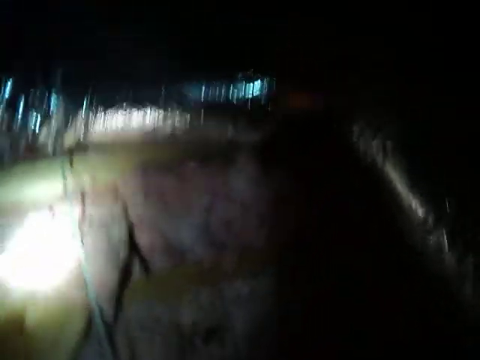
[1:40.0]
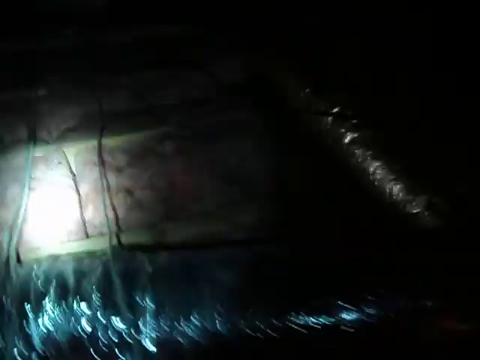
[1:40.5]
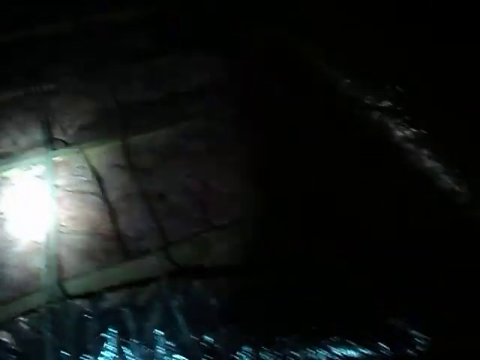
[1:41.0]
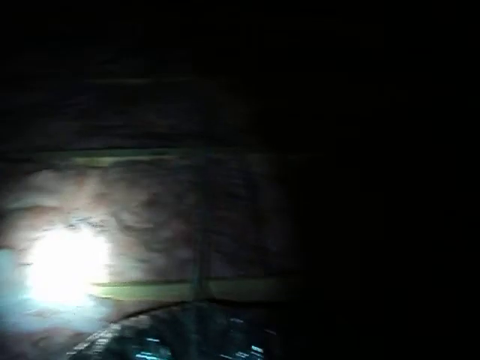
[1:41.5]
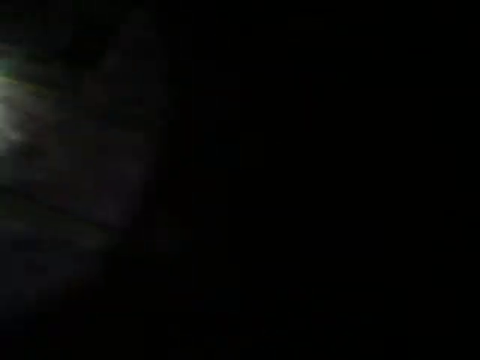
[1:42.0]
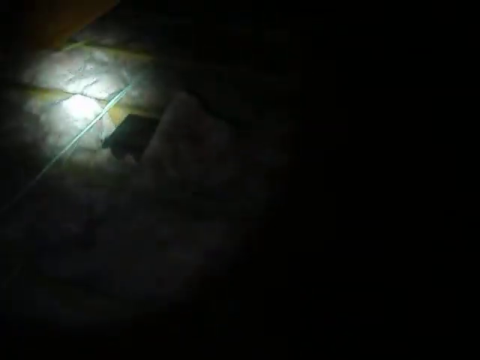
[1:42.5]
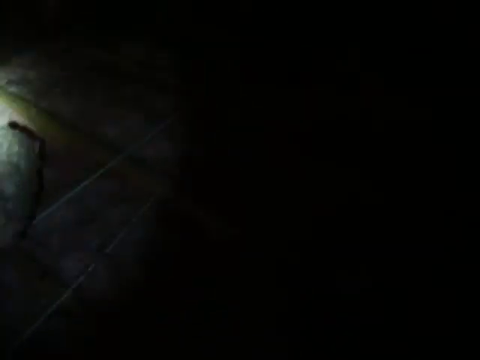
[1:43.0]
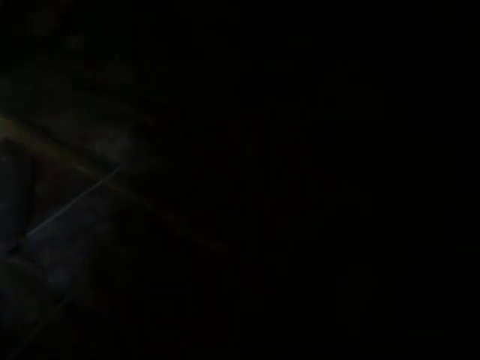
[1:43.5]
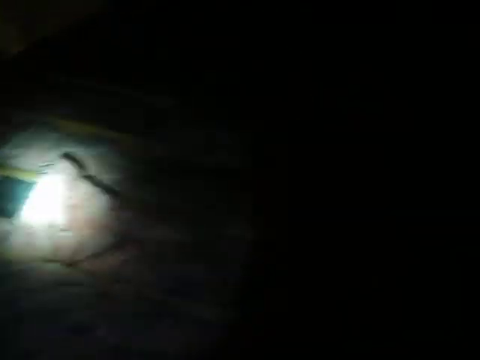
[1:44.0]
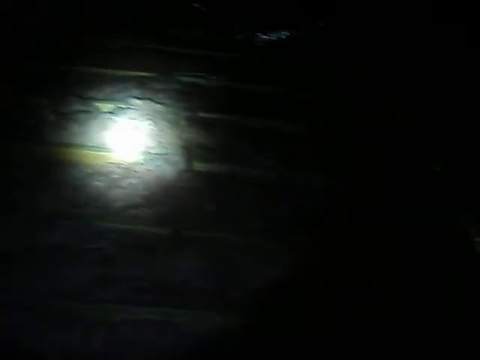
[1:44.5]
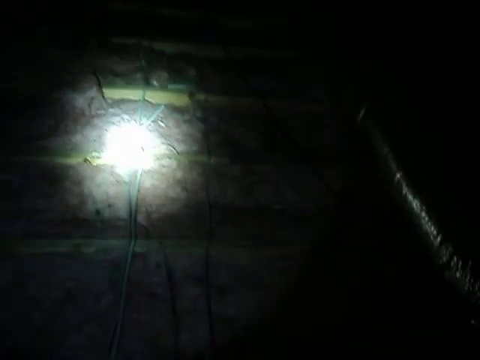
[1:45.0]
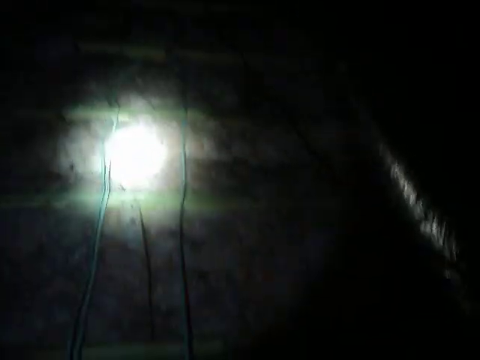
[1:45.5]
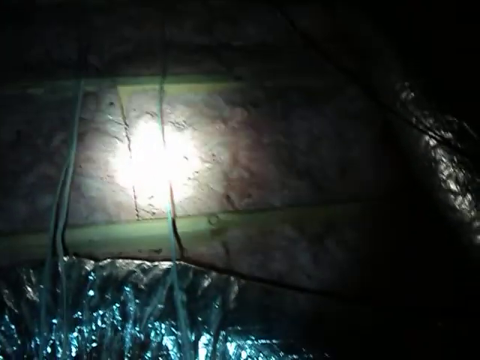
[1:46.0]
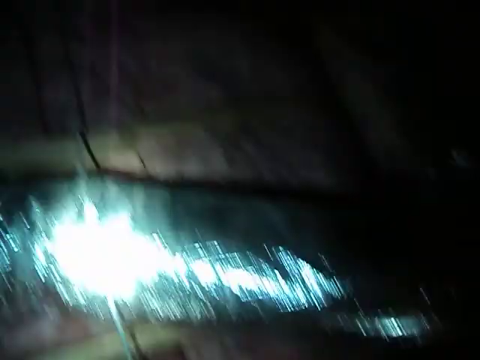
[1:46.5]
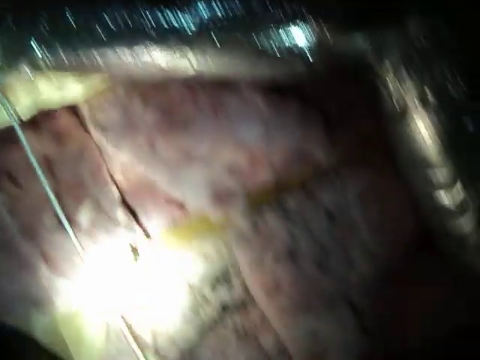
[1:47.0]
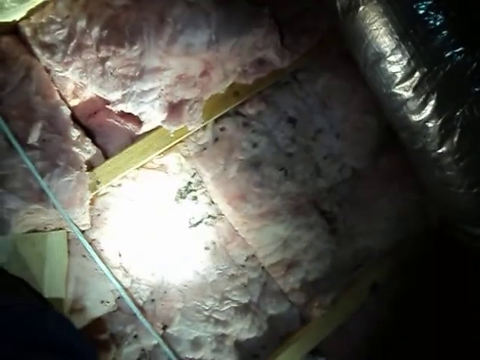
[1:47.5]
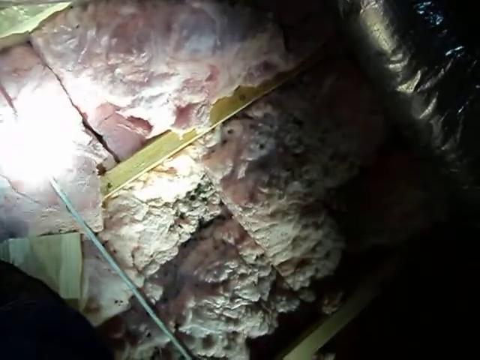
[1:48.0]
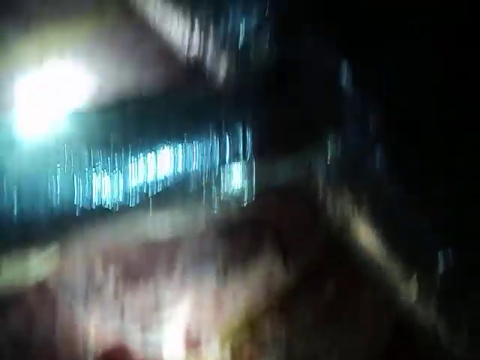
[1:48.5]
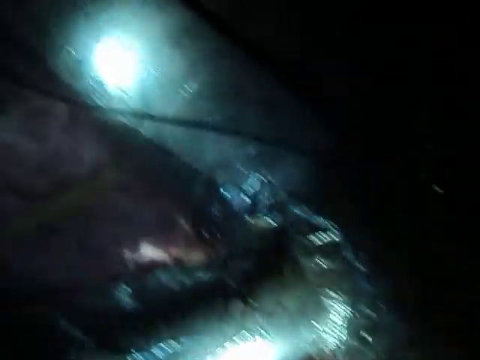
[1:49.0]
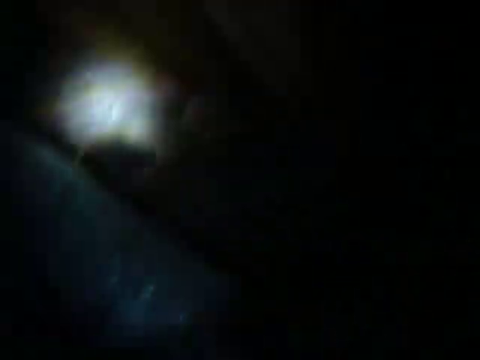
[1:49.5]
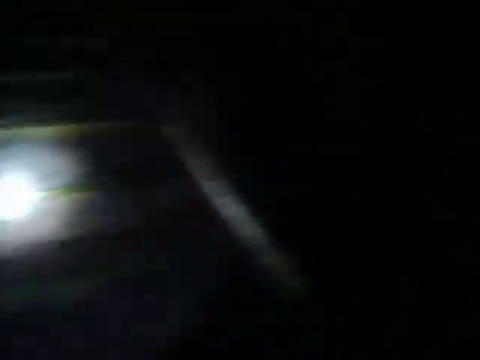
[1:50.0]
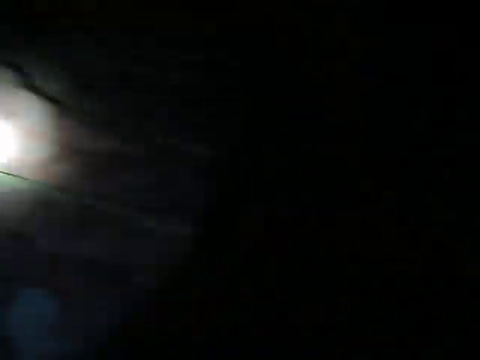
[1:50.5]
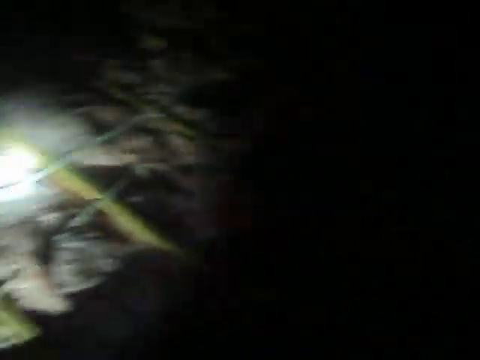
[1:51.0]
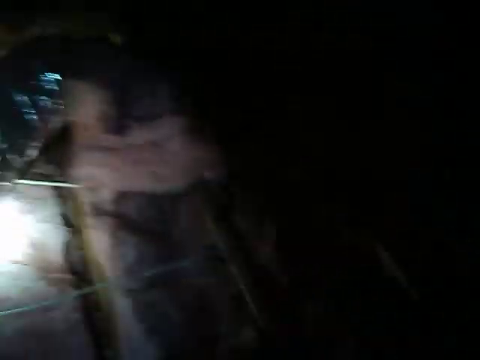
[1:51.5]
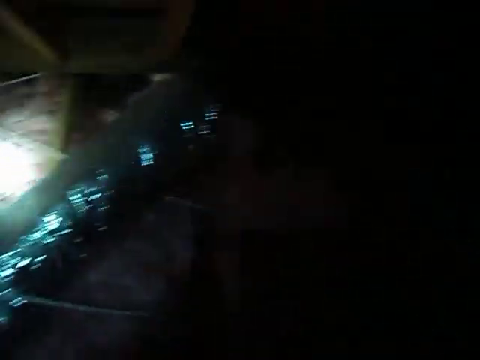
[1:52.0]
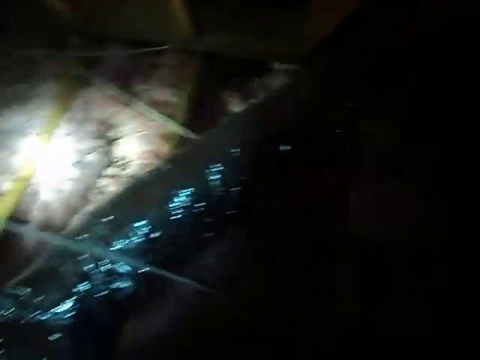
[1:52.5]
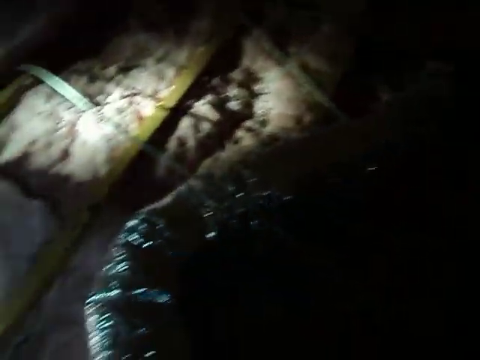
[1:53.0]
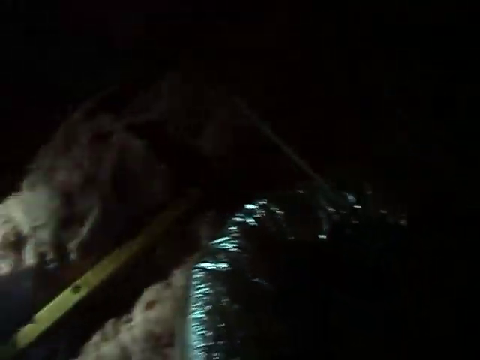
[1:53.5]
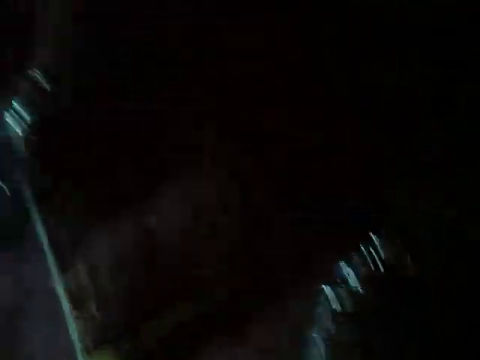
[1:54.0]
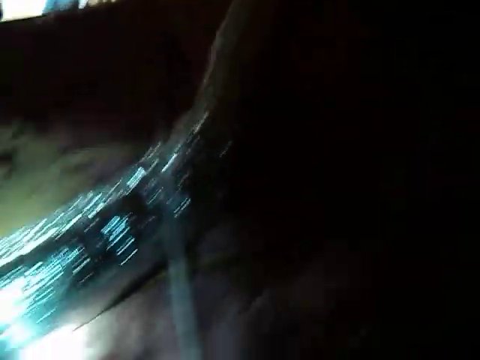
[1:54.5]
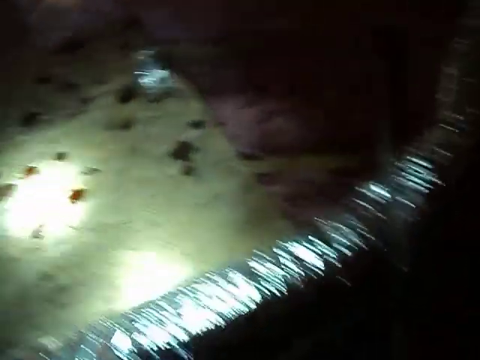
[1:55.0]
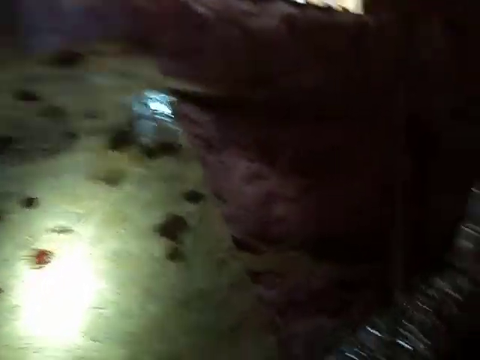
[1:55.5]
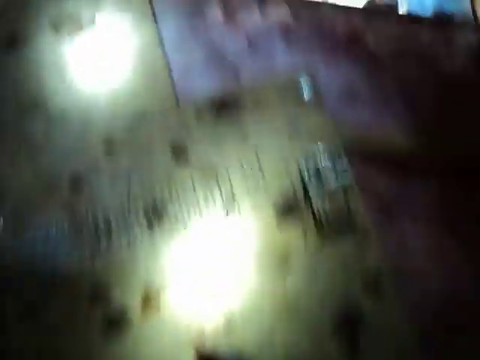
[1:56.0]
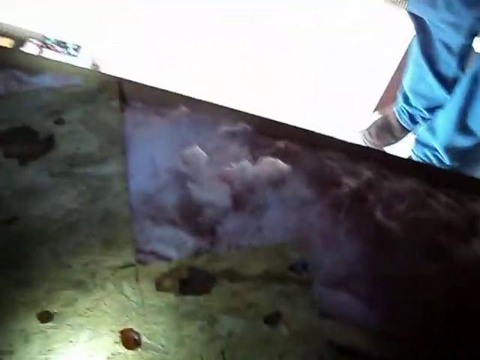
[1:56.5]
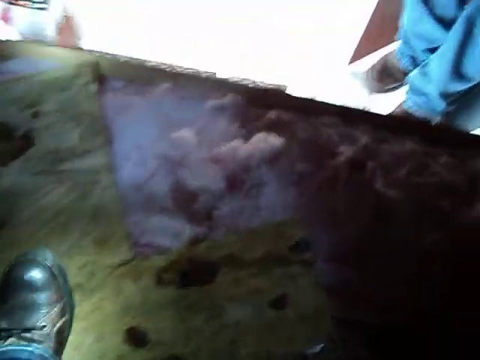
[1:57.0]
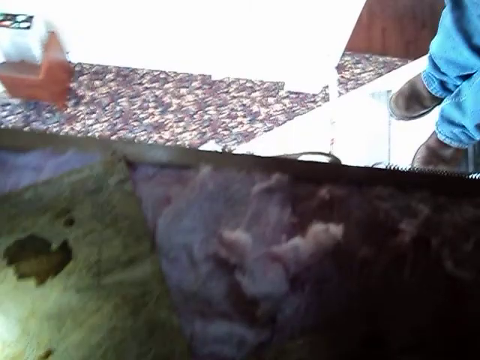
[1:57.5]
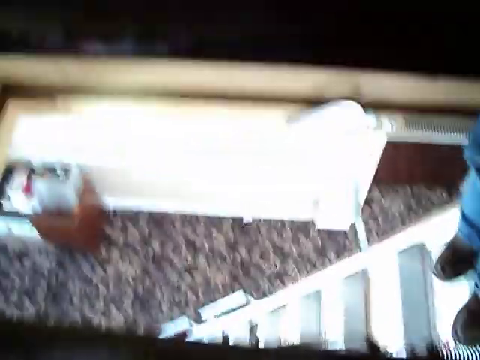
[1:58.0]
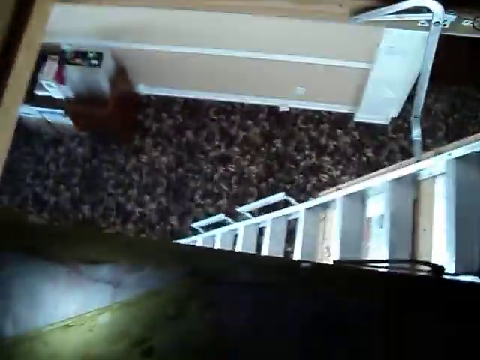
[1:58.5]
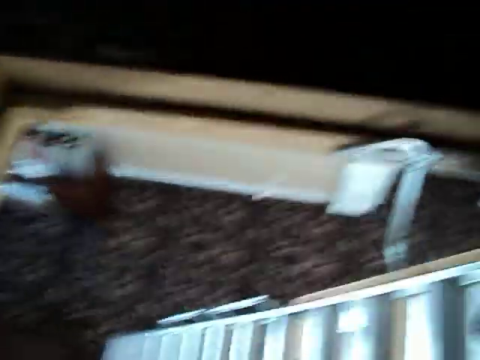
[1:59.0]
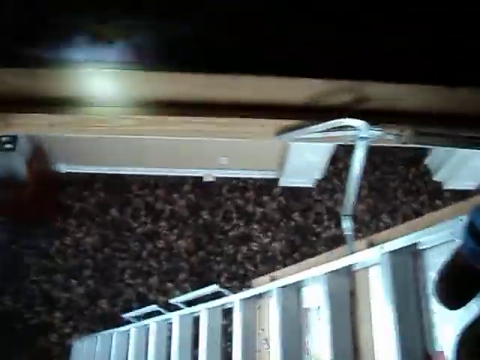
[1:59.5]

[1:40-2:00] Inside a dark attic, the person filming holds the camera, making the footage shaky, and uses a flashlight, the only real light, illuminating wherever it is turned. The light is on the floor joists, which have pink batt insulation in between, and it somewhat bounces around. The person holding the light and camera appears to be walking through the attic. The flashlight keeps moving around to different parts of the attic, making it very dizzying. The light faces down, capturing the insulation. Their feet are visible stepping on parts of the plywood, and the camera shakes a lot.